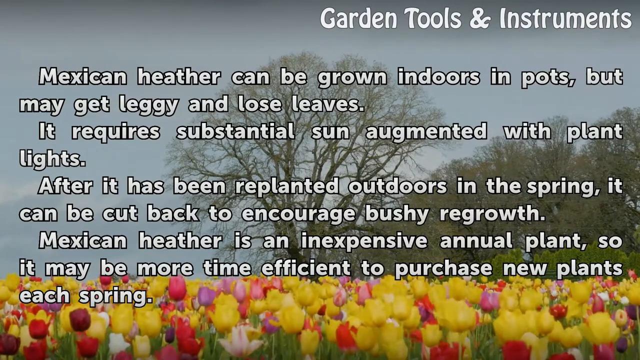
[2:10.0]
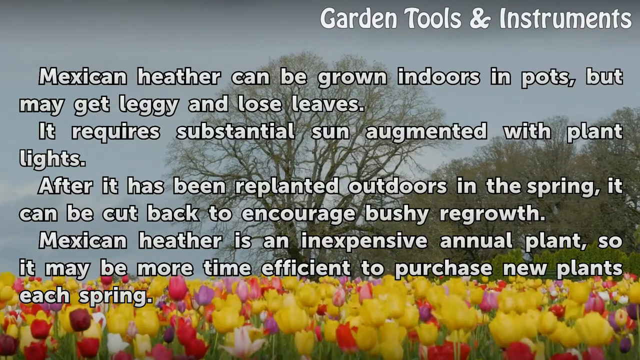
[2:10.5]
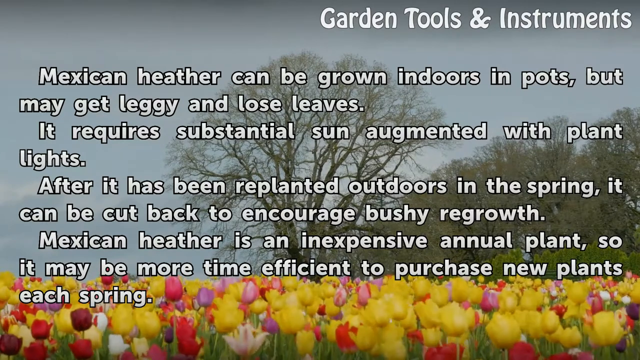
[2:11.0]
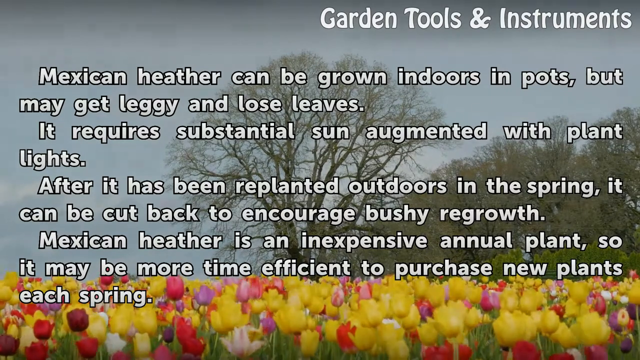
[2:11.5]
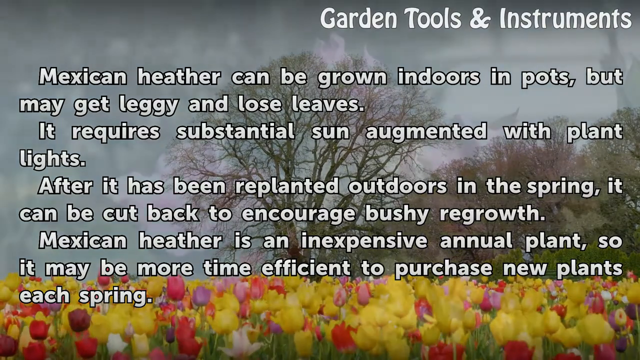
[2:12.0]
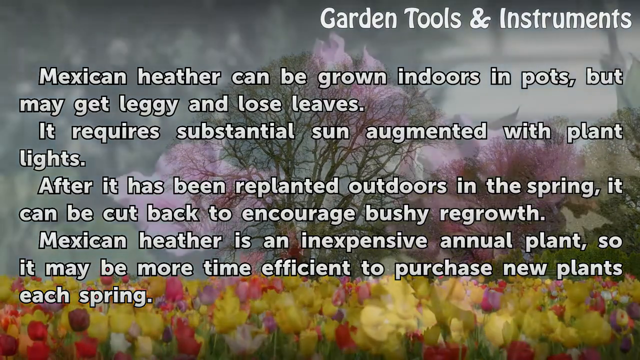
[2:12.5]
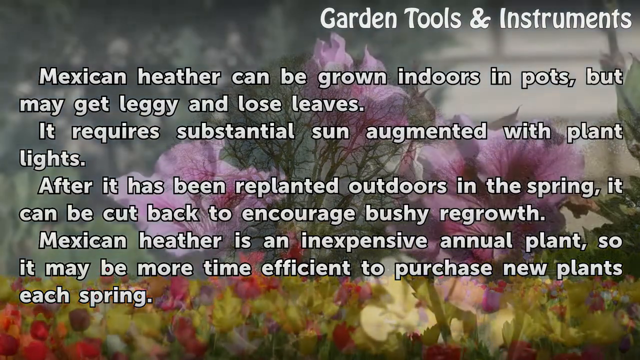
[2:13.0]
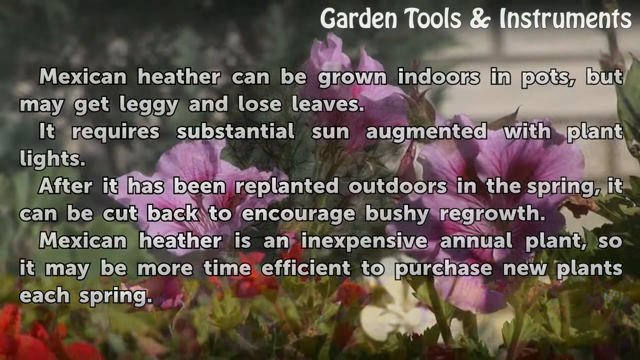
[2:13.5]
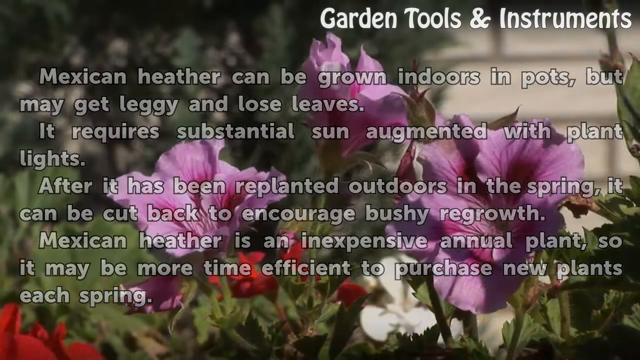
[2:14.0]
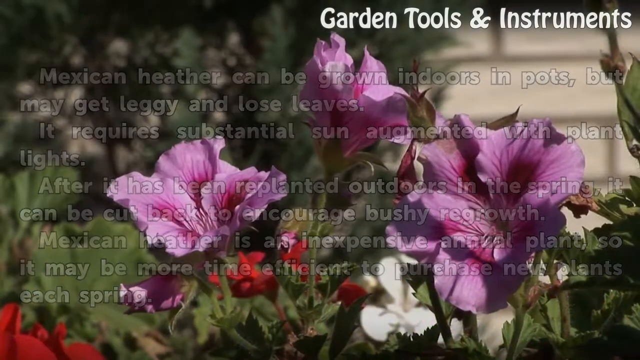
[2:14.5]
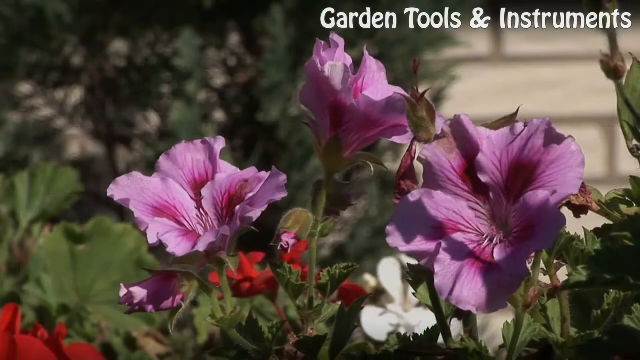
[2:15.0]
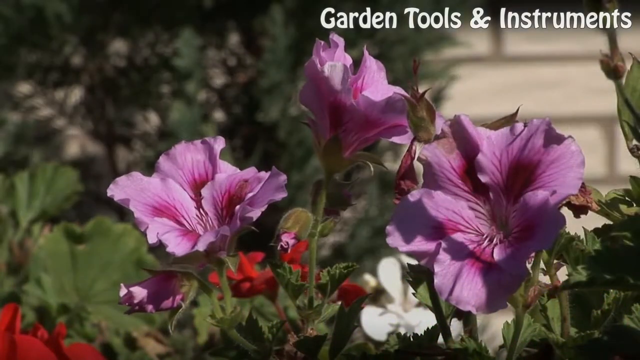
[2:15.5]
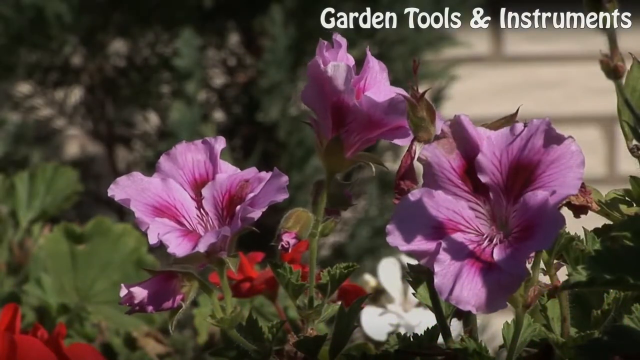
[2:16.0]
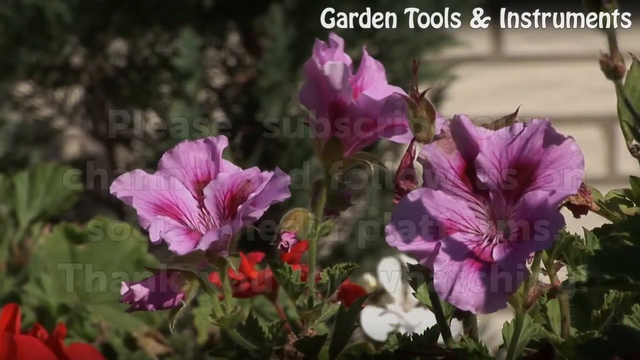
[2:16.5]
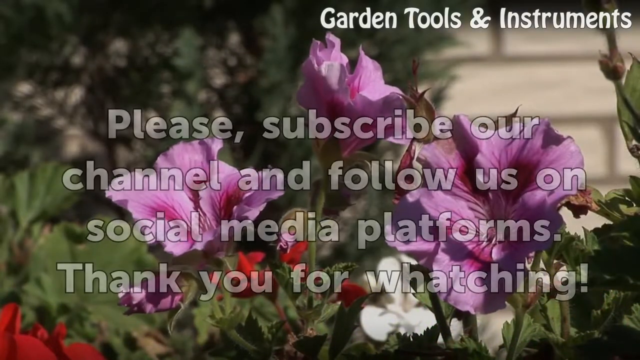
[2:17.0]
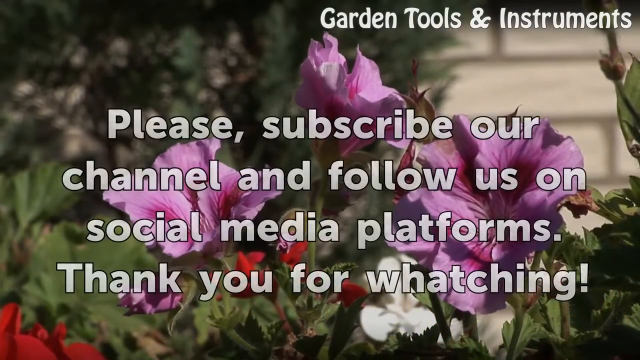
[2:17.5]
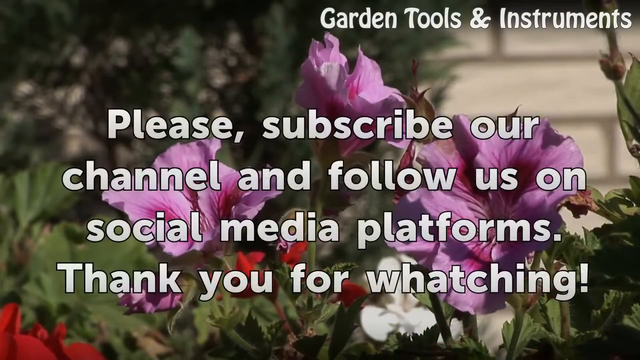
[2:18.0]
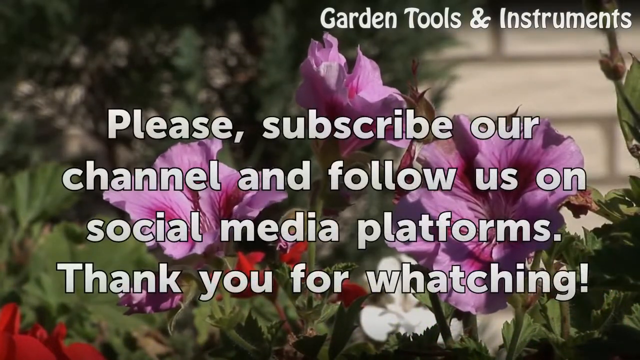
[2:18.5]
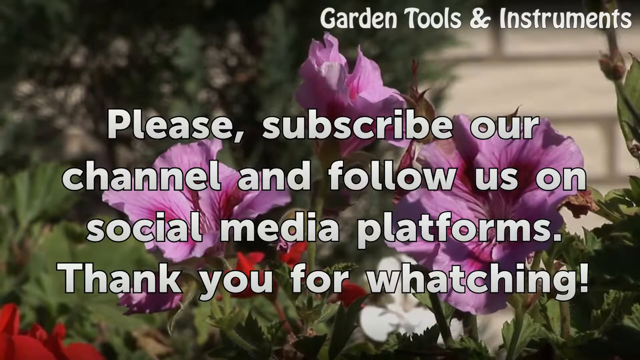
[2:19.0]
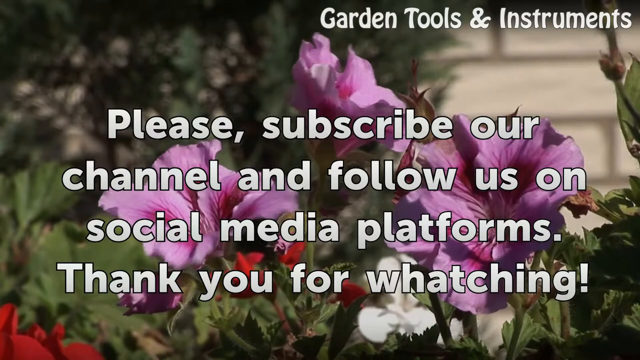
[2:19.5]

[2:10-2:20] Very bright colourful yellow, pink and purple flowers grow in a field, and beyond them are tall bare trees against a very dull grey sky. White text in the top right corner reads "garden tools and instruments", and a paragraph of text is superimposed over the video: "Mexican heather can be grown indoors in pots but may get leggy and loose leaves. It requires substantial sun augmented with plant lights. After it has been replanted outdoors in the spring it can be cut back to encourage bushy regrowth. Mexican heather is an inexpensive annual plant so it may be more time efficient to purchase new plants each spring." The colourful flowers sway in the wind. The scene then changes to a close-up of a pink flower with purple centres, with a red one slightly in the background. Superimposed in a large white font is "please subscribe our channel and follow us on social media platforms. Thank you for whatching.", with the word watching misspelled as "whatching".